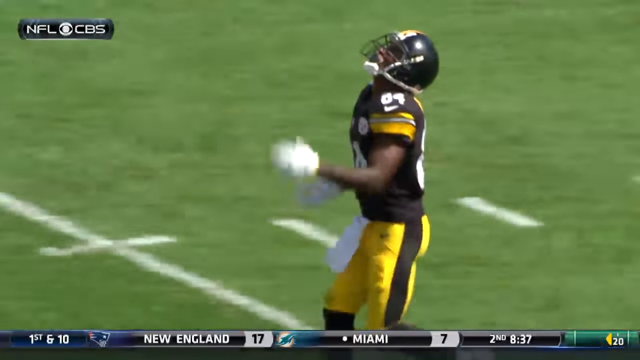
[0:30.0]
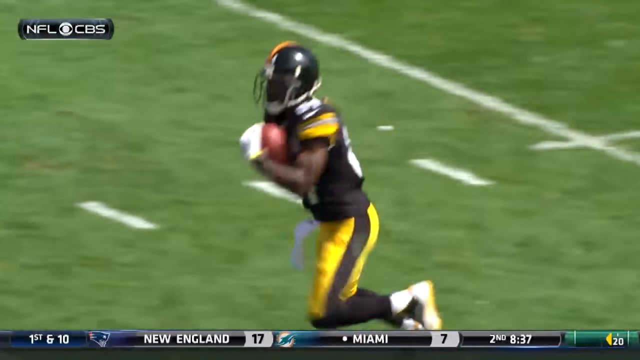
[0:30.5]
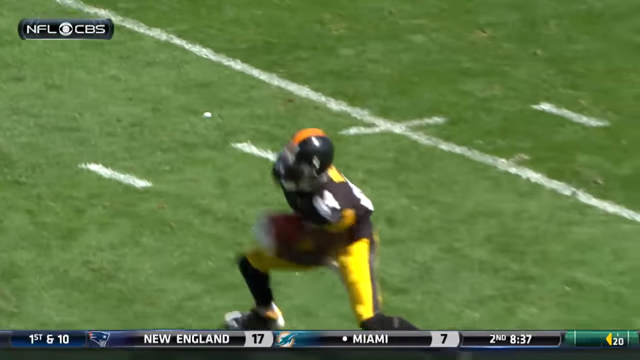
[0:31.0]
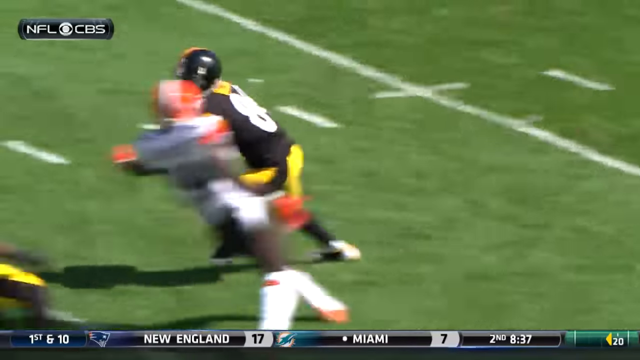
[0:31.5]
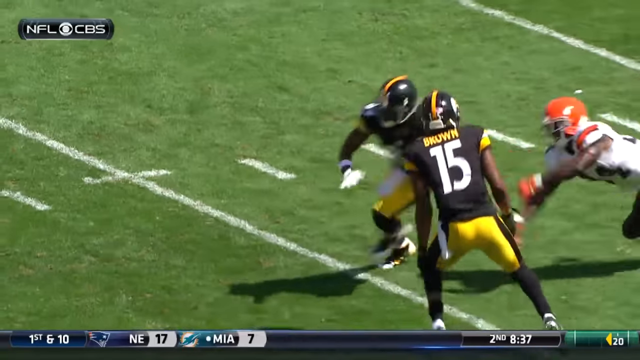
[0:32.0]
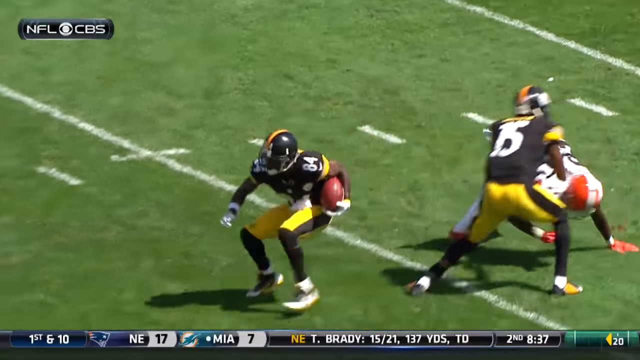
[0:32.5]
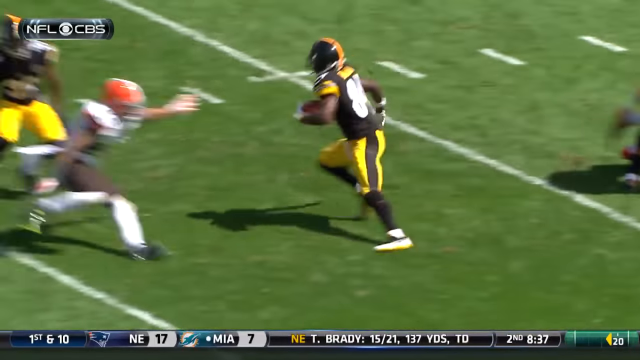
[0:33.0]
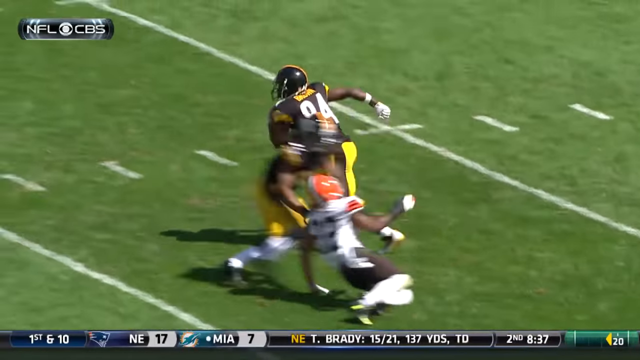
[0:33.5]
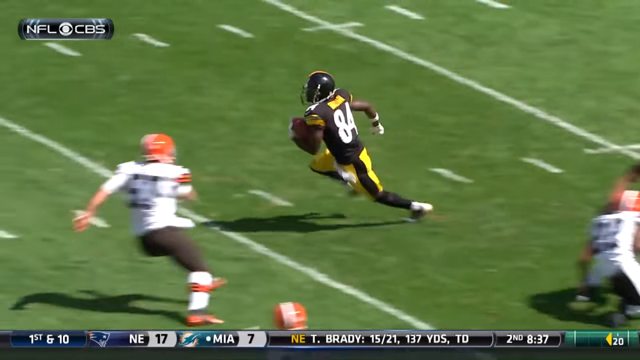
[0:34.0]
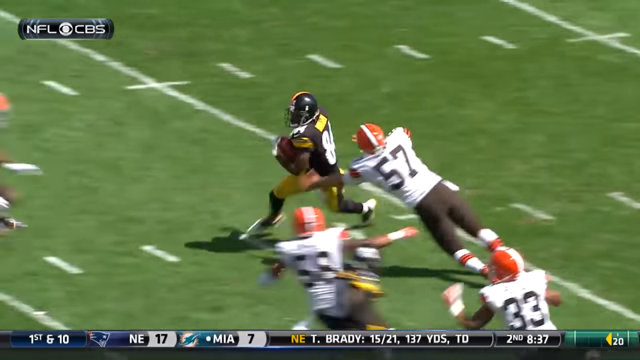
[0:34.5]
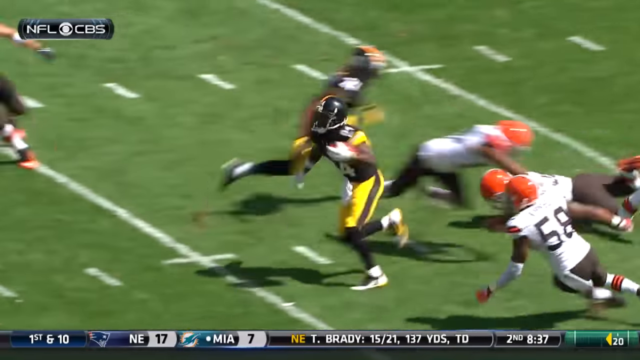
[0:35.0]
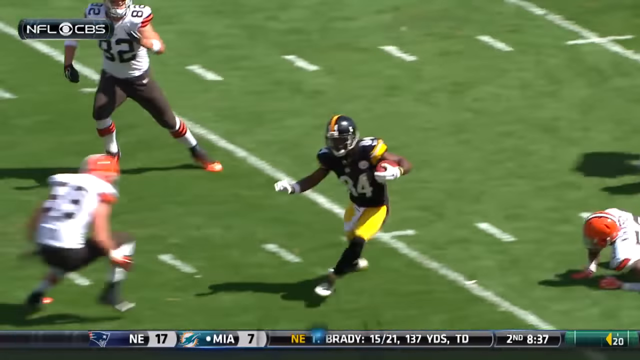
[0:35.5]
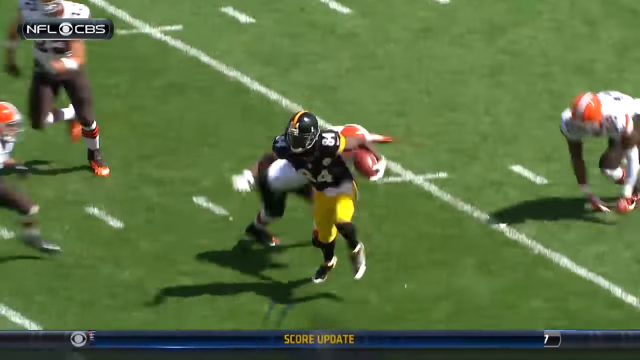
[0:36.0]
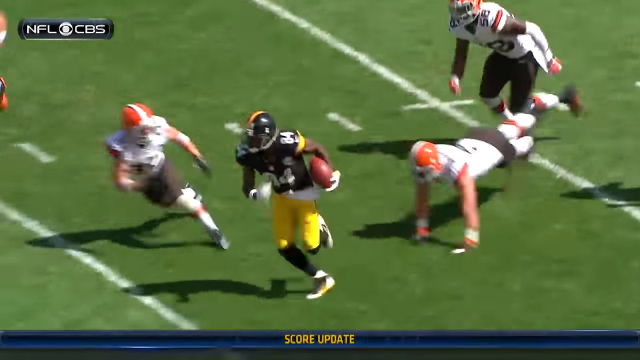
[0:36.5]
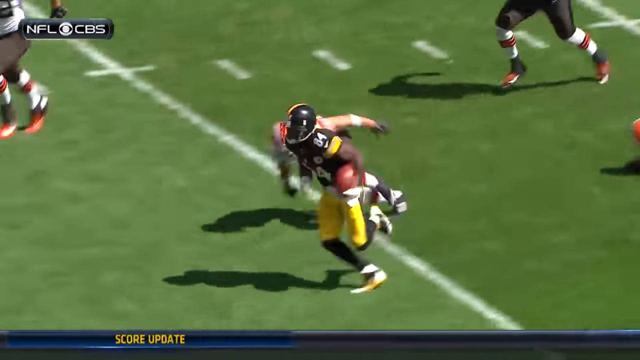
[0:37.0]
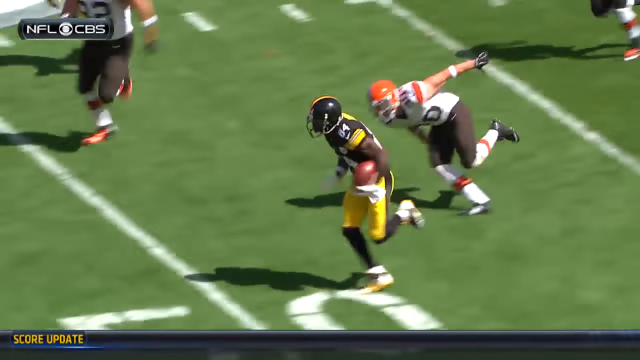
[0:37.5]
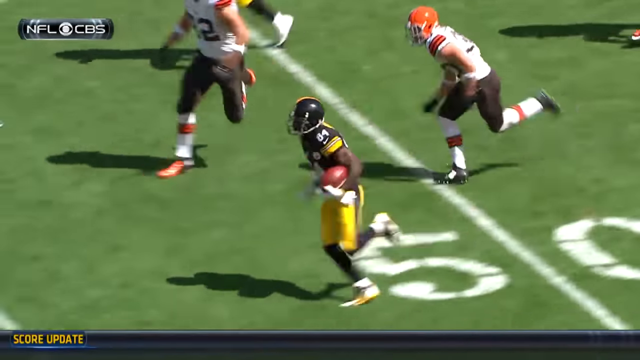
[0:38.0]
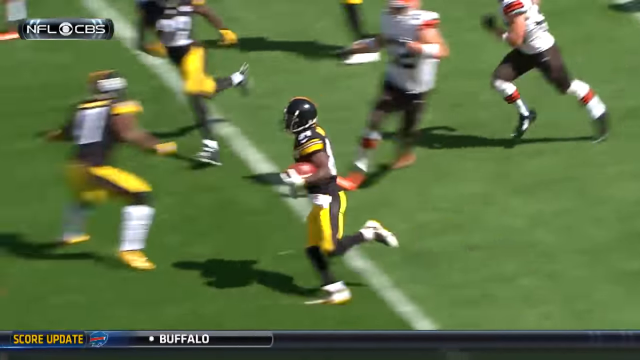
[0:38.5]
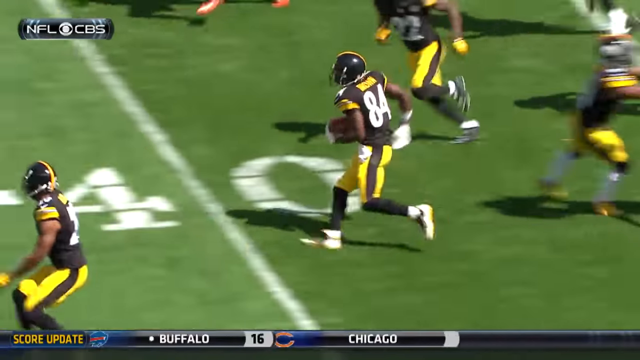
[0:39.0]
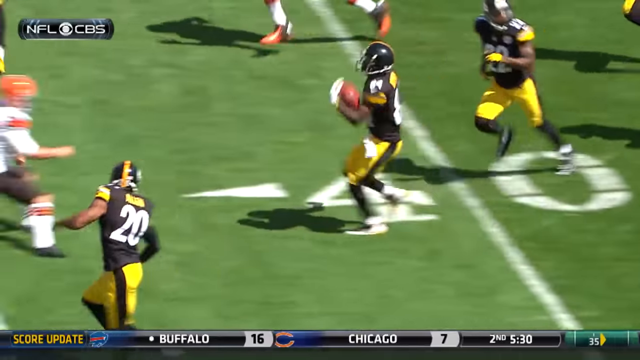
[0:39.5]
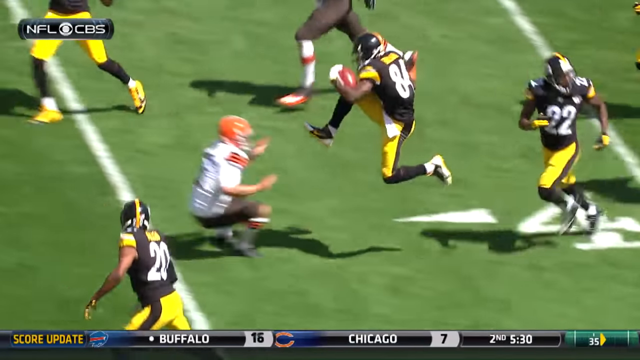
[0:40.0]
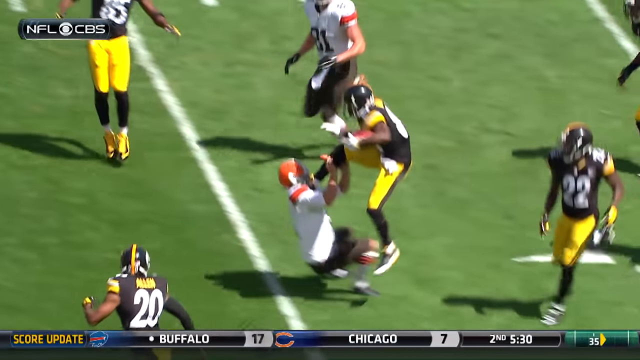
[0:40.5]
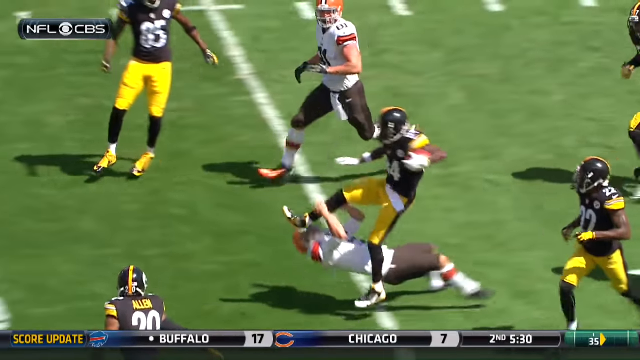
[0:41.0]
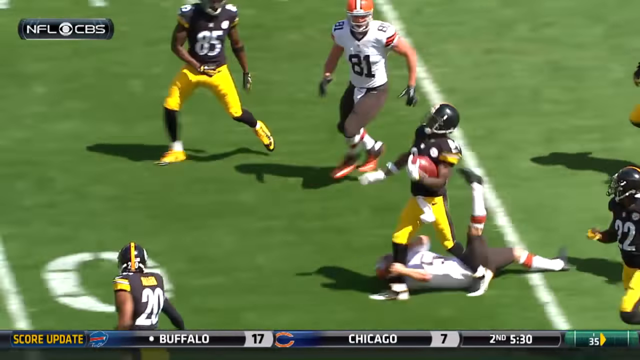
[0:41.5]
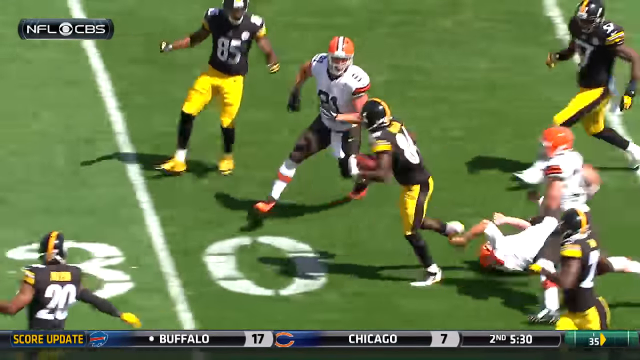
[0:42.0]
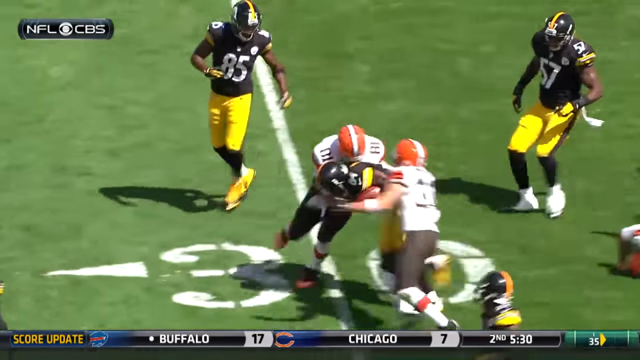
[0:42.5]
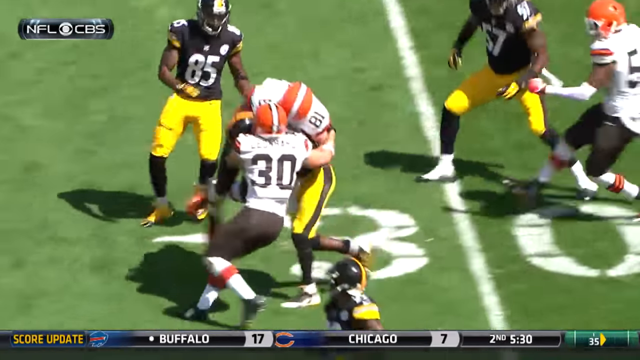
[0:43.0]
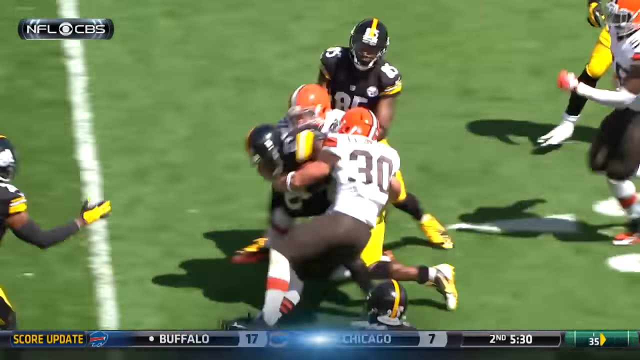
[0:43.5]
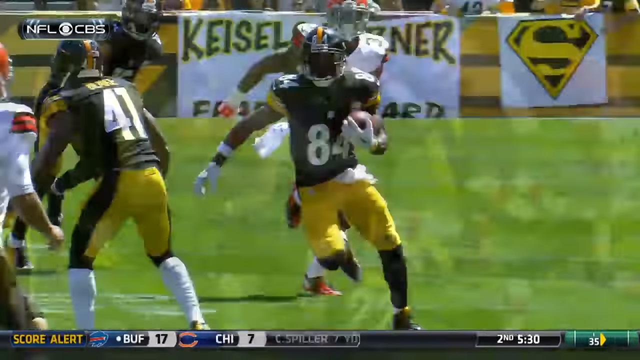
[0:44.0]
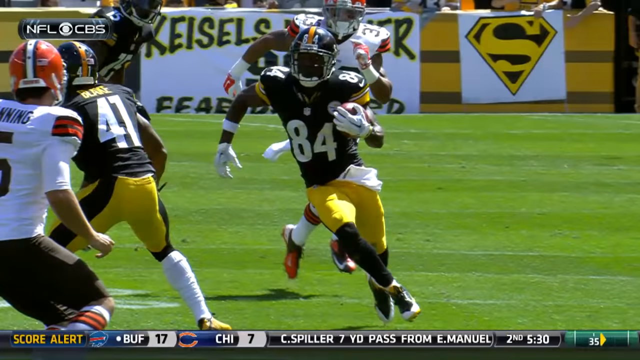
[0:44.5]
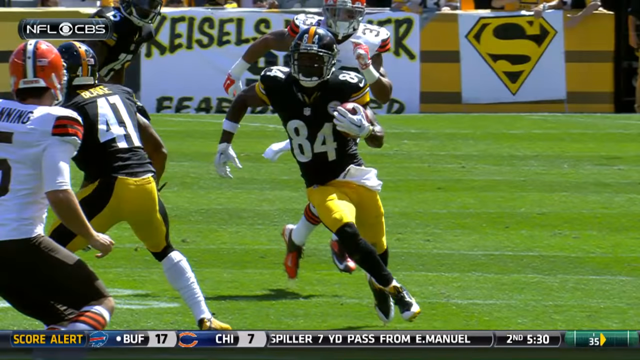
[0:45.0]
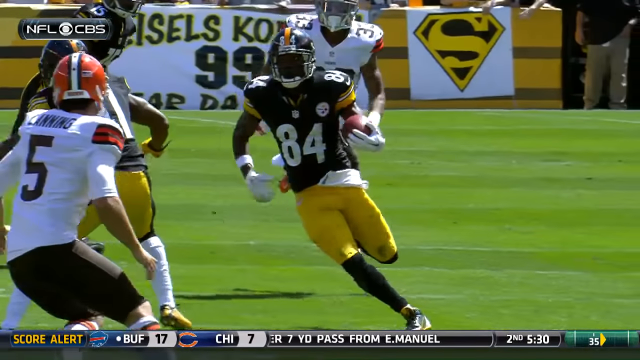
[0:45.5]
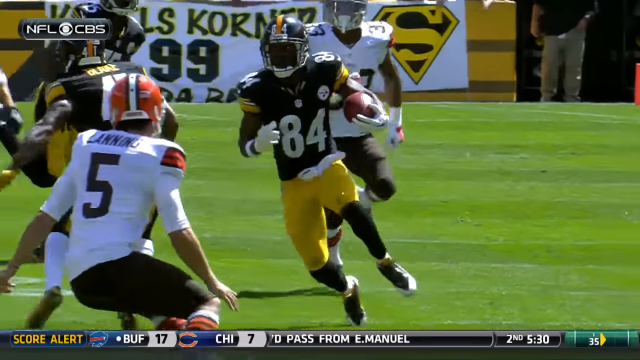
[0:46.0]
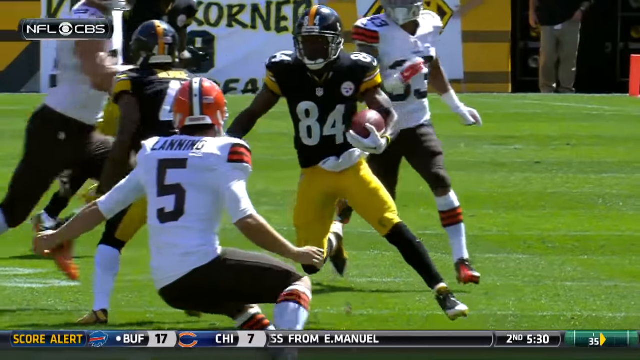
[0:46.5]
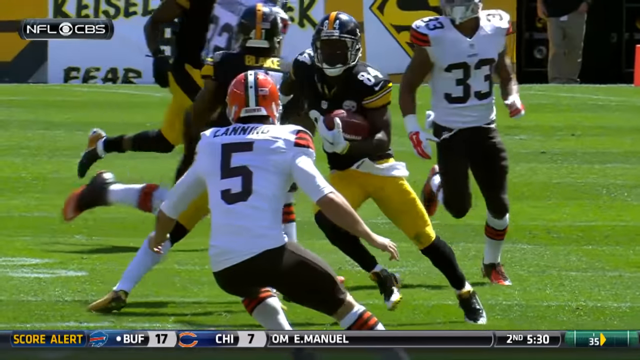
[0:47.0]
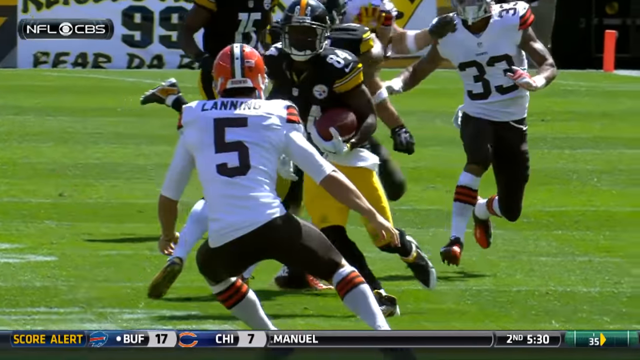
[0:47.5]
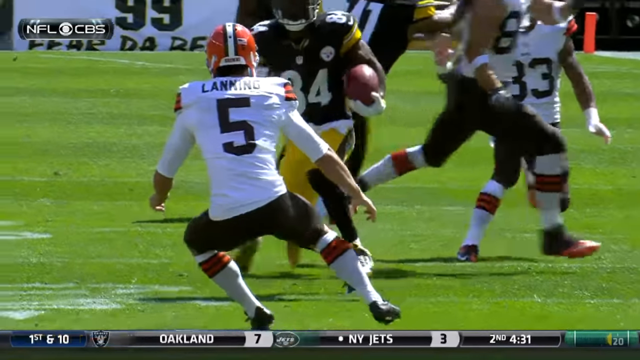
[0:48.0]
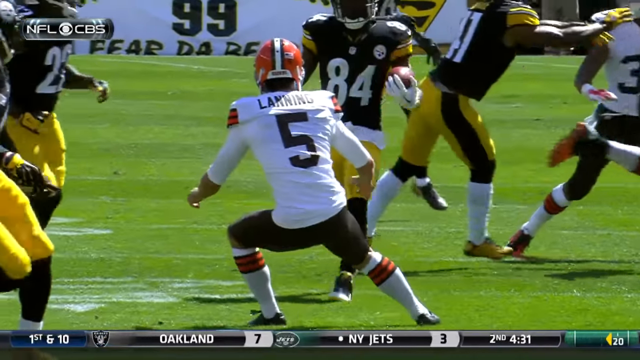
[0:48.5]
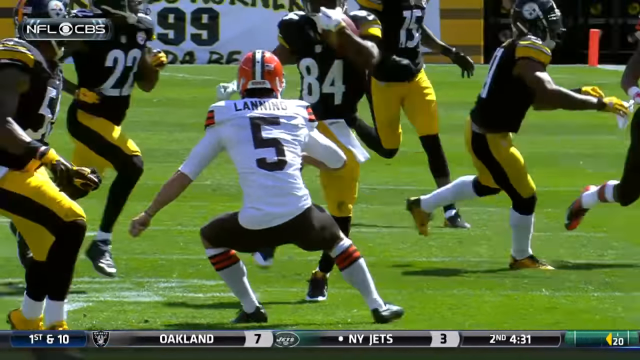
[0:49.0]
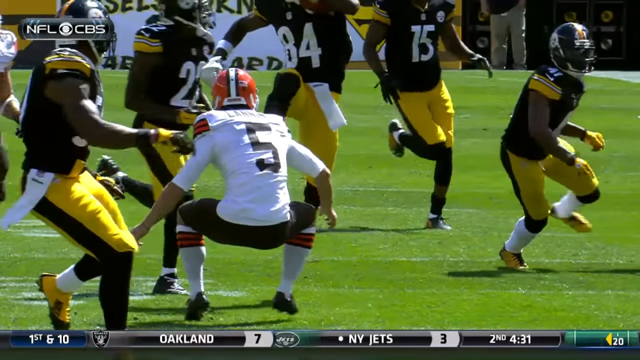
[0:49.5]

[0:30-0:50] A replay shows number 84 getting the ball with a closer camera zoom. He dodges multiple players, and once he passes the 40 line toward the player he kicks, the play is shown in slow motion. The player is sort of crouching down with both hands out in front of him, as if saying "no, stop," trying to block what is happening, while number 84 sort of gives him a full face of the cleat, knocking him back onto his back; the player flips over from the force. The kicked player's Cleveland teammates rush at number 84 and bring him down. Another, flatter camera angle shows the play from just behind the player who got kicked, Lanning, number 5, about to get kicked in slow motion. Throughout the replays, the scores of other teams' matches keep updating at the bottom of the screen, continuing onward even though the replay repeats.